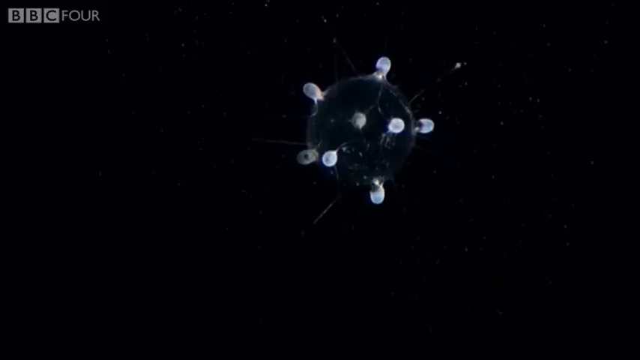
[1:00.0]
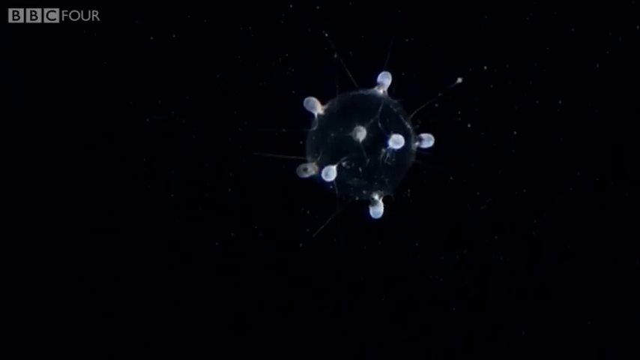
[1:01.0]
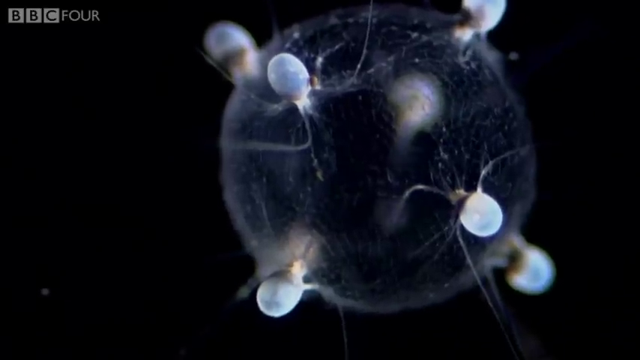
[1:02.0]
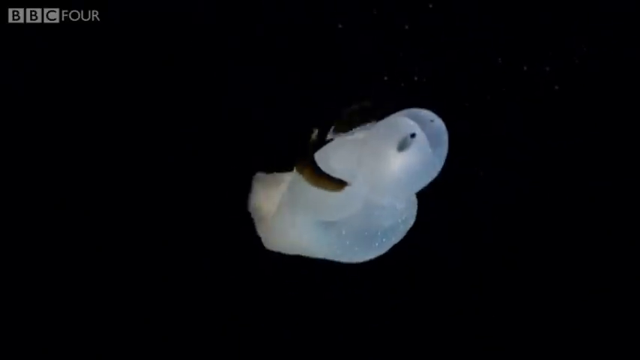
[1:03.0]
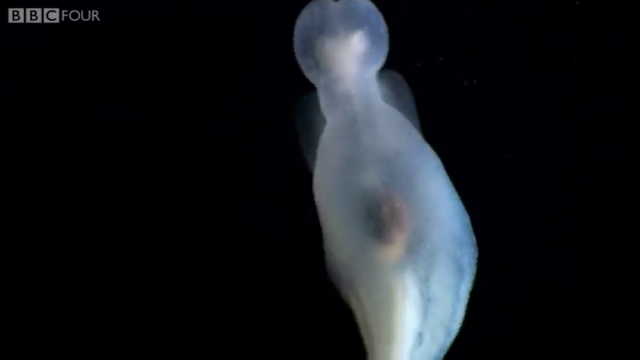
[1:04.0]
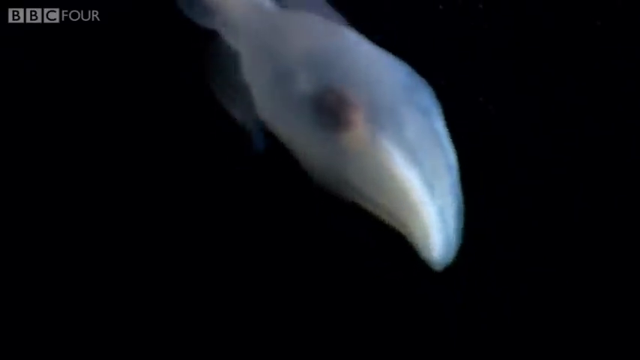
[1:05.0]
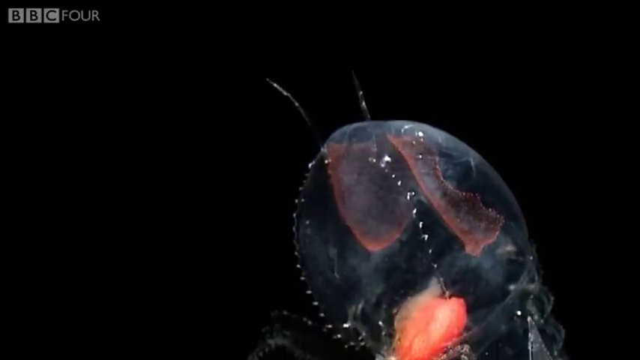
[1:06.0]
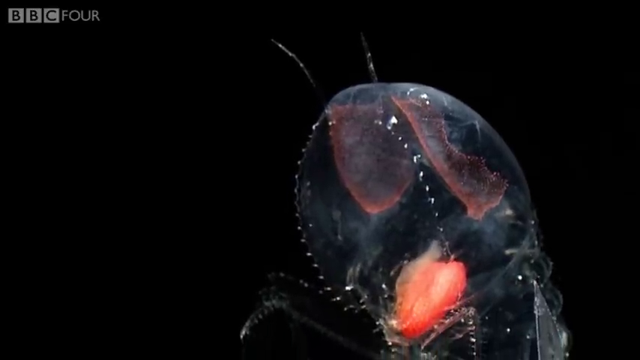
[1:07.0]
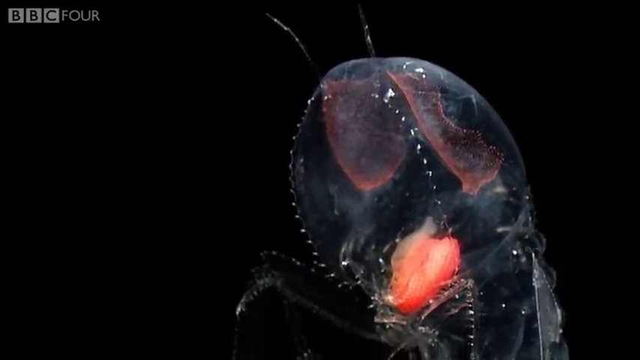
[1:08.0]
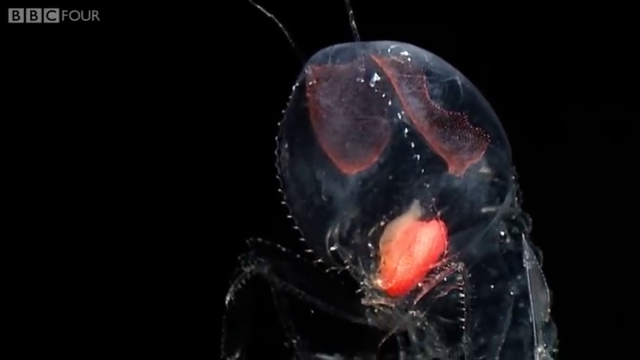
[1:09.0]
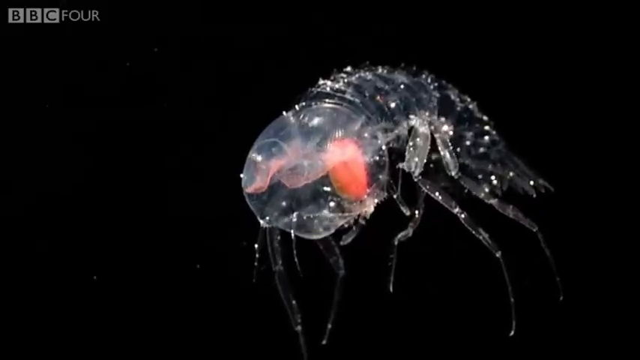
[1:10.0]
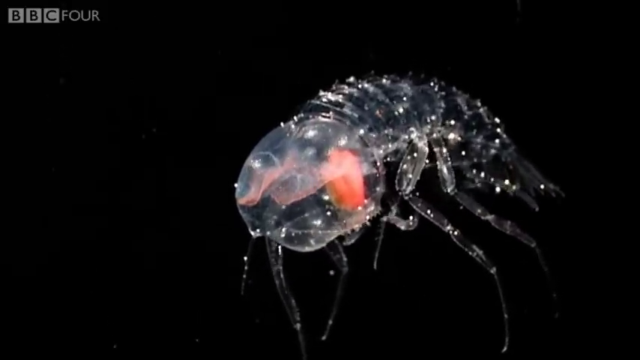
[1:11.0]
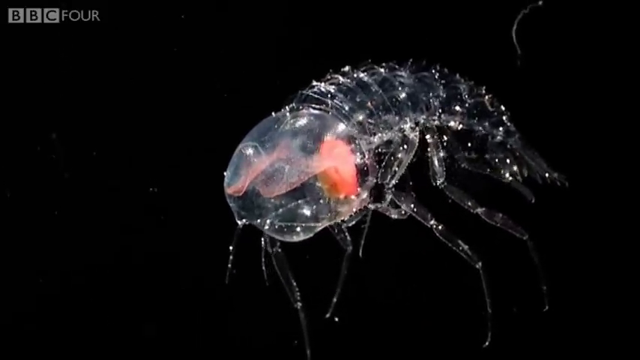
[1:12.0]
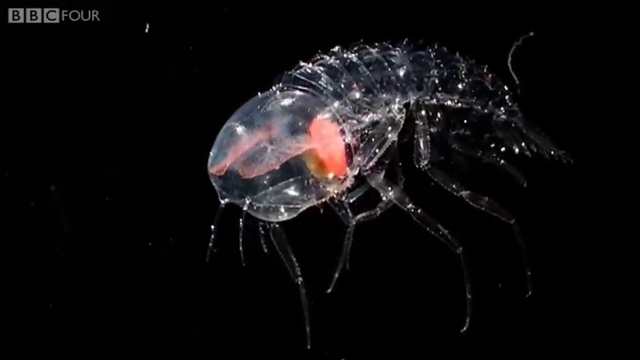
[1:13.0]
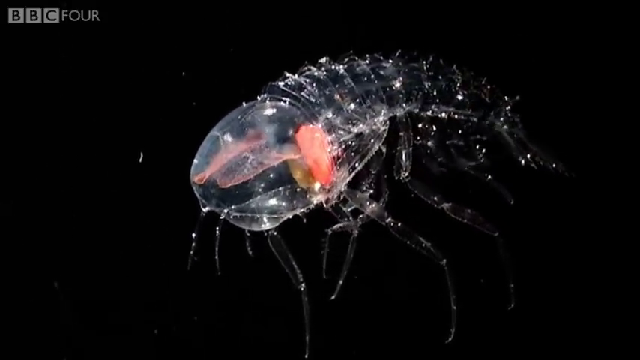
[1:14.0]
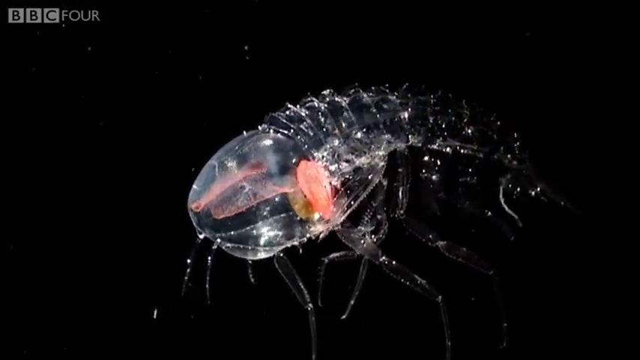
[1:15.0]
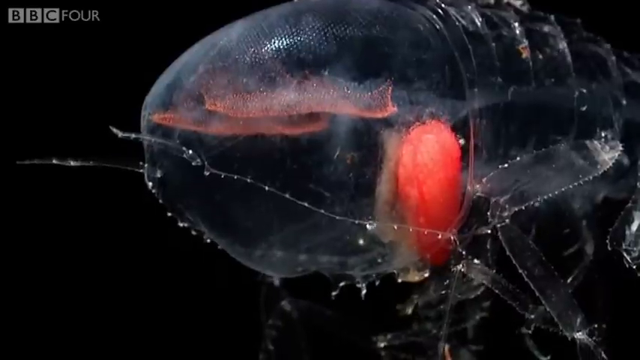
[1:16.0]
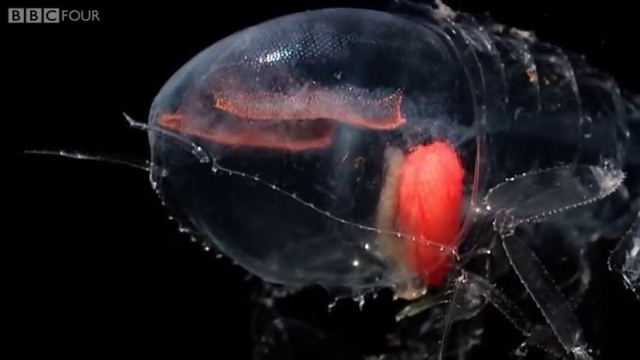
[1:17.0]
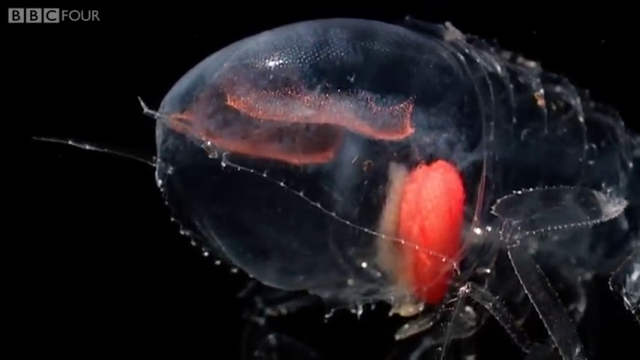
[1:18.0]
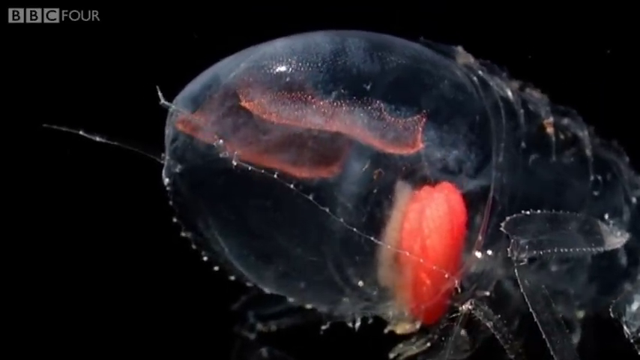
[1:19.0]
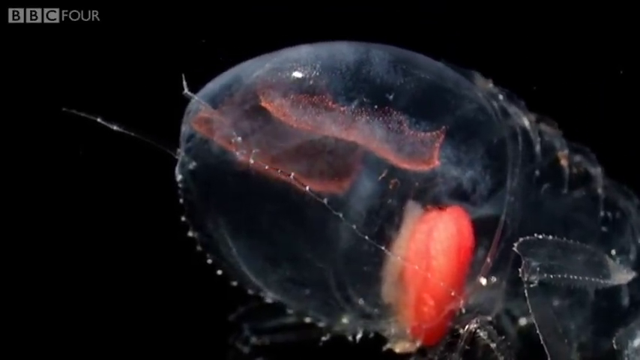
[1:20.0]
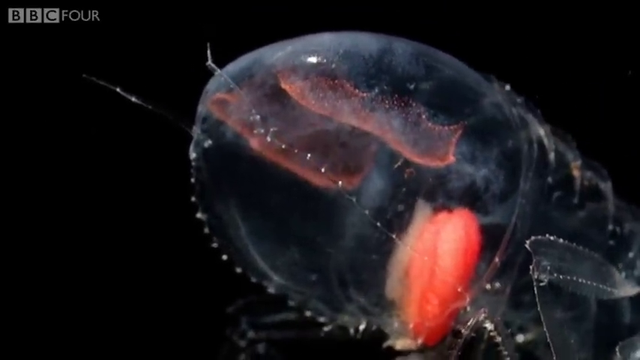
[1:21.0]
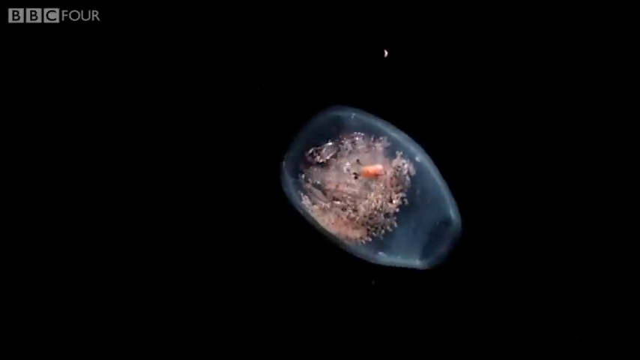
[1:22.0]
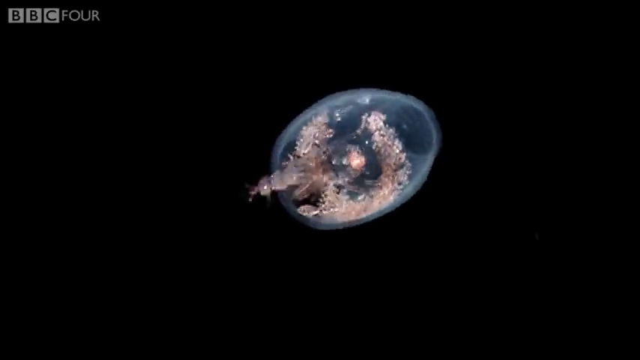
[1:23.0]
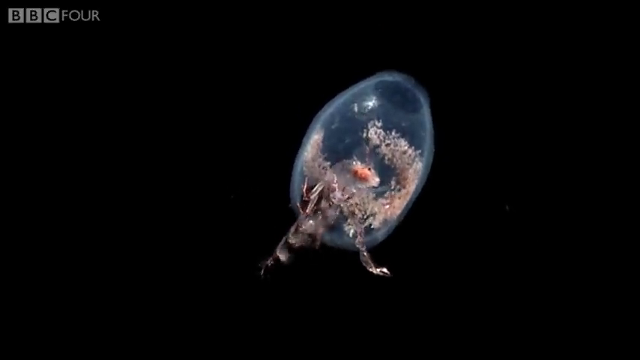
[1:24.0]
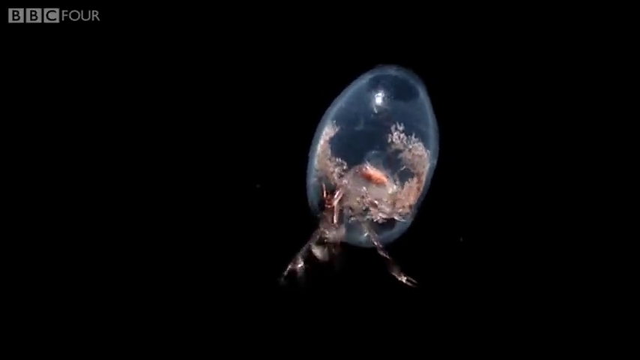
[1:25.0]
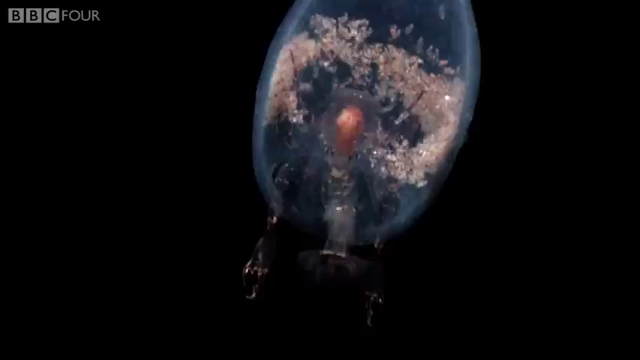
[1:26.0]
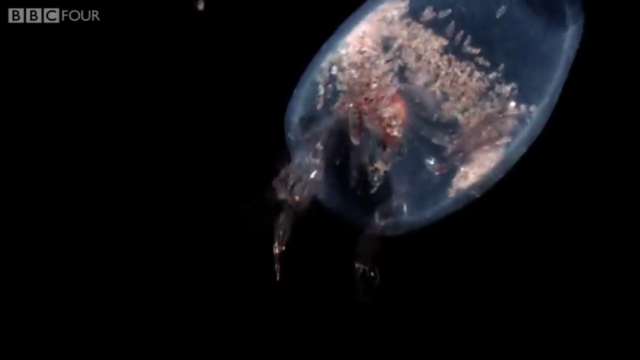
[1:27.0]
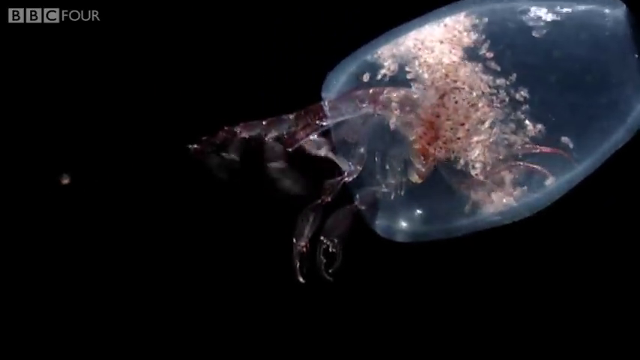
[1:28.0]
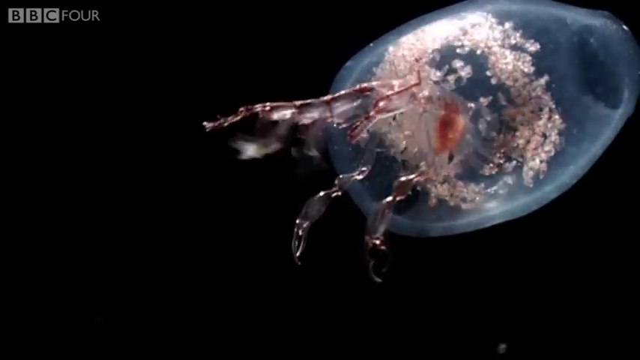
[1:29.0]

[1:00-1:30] Filmed in the deep sea, various creatures are shown. Some have tentacles or legs hanging down beneath them and seem to use some of those tentacles to propel themselves through the water. One creature is completely see-through, and what looks like a red brain is visible inside it. Another underwater creature has a wasp-like head and body, with a large clear, bubble-like part at the front of its body: see-through skin at the front and a wasp-like body at the rear. Several of these deep-sea creatures are shown, all with see-through or at least translucent bodies; not all can be seen straight through, but the organs inside all of them are visible. Some are translucent and white, with flappers or flippers on either side that move up and down, propelling them through the water.